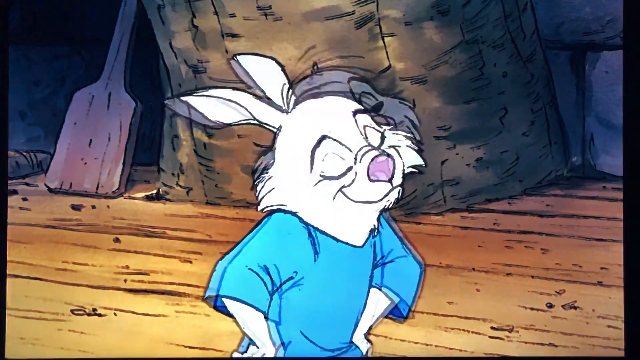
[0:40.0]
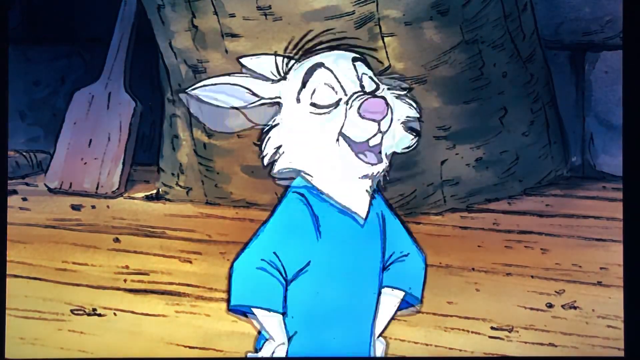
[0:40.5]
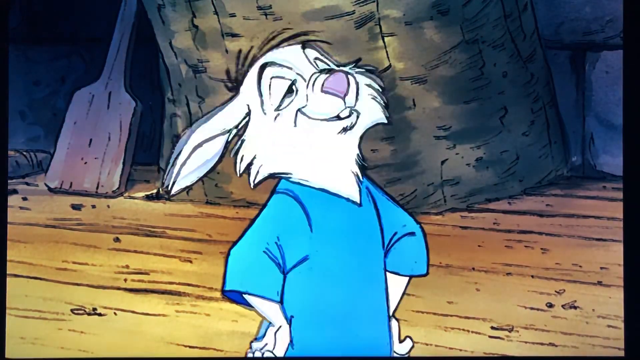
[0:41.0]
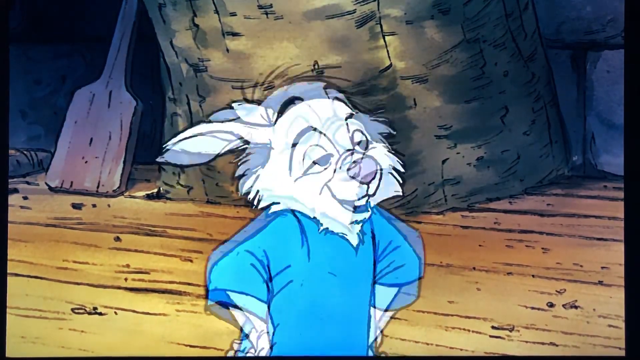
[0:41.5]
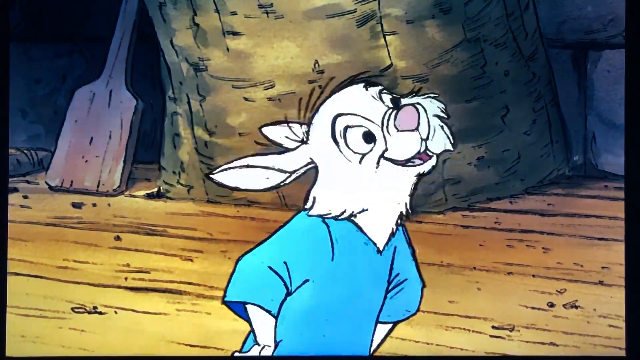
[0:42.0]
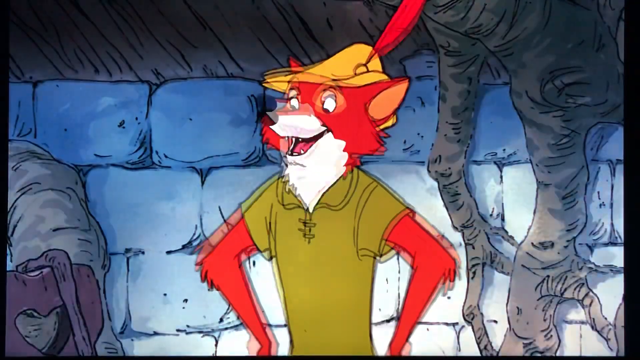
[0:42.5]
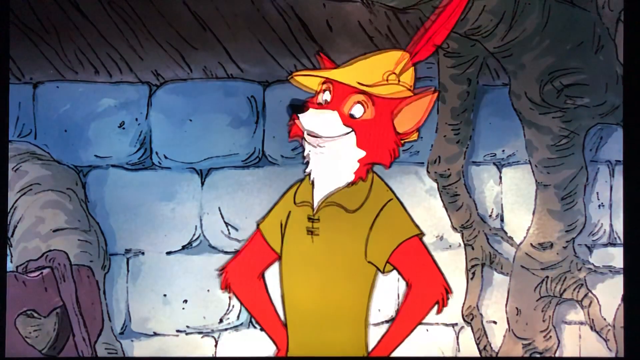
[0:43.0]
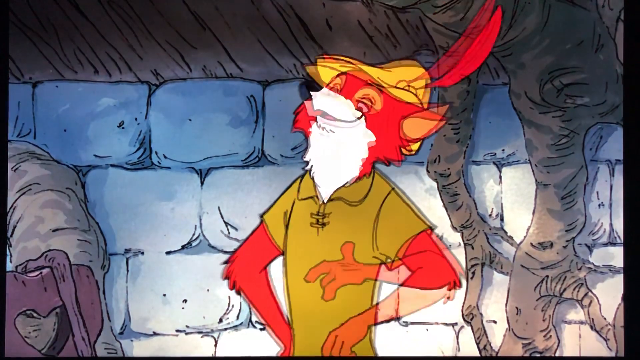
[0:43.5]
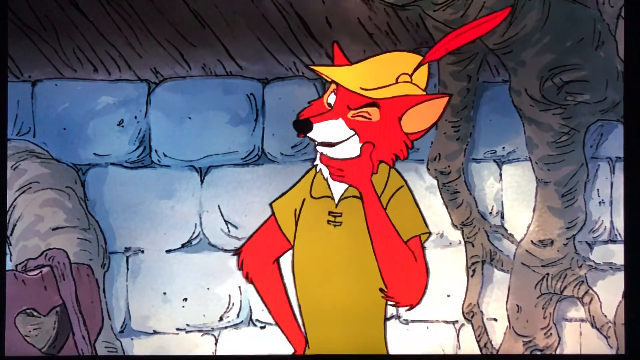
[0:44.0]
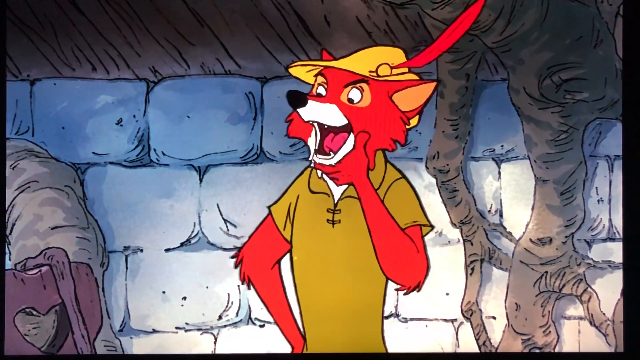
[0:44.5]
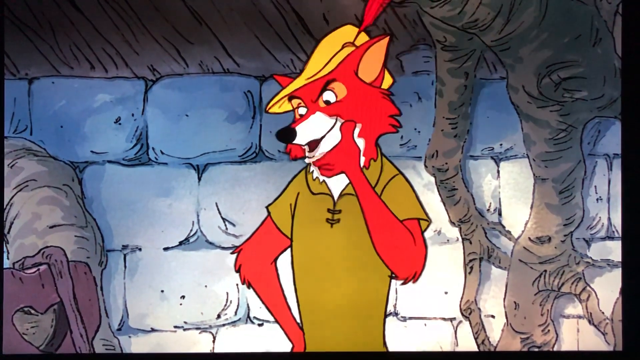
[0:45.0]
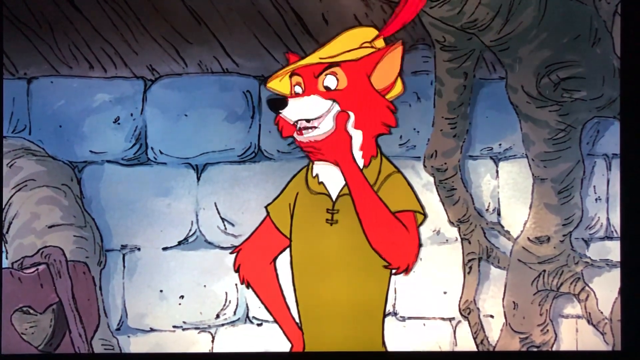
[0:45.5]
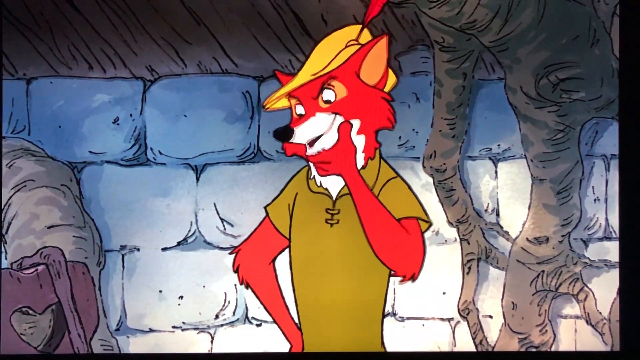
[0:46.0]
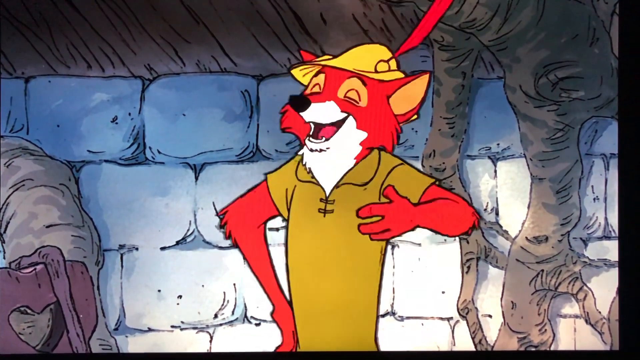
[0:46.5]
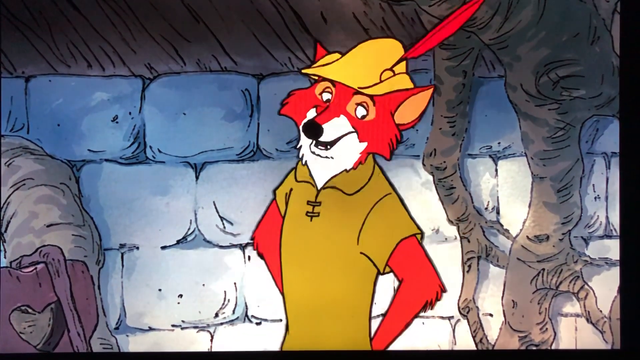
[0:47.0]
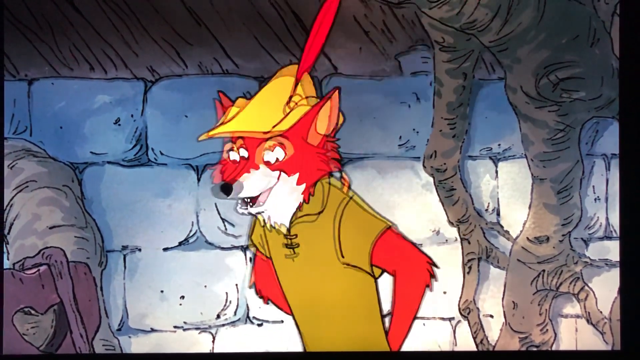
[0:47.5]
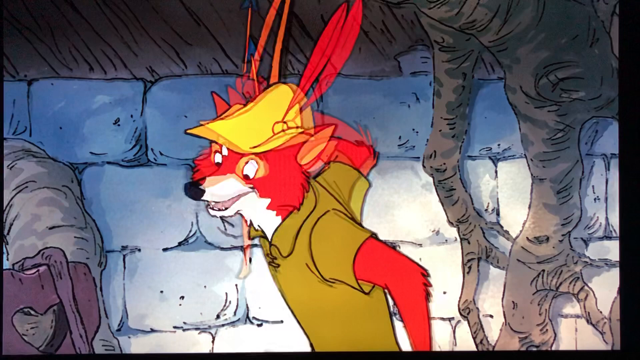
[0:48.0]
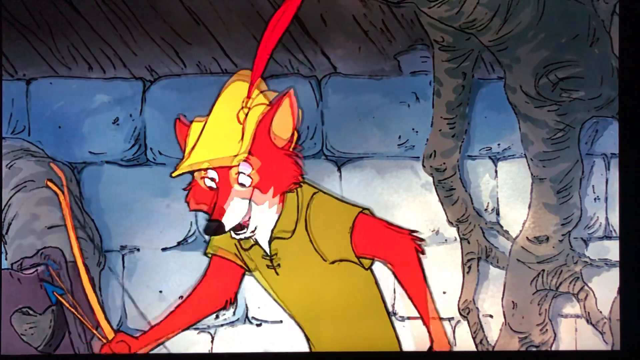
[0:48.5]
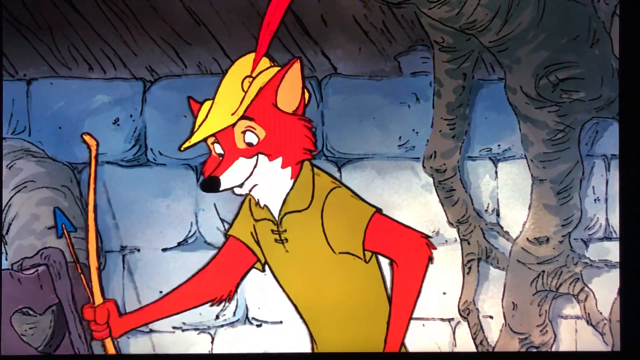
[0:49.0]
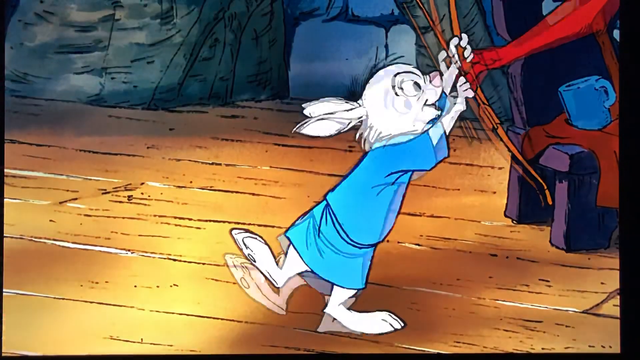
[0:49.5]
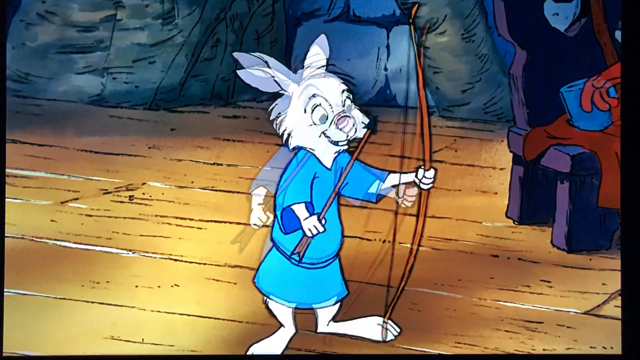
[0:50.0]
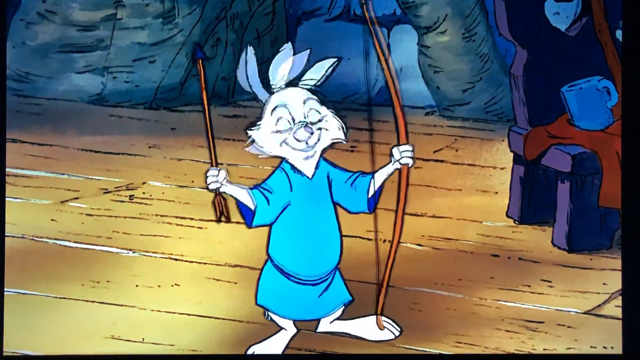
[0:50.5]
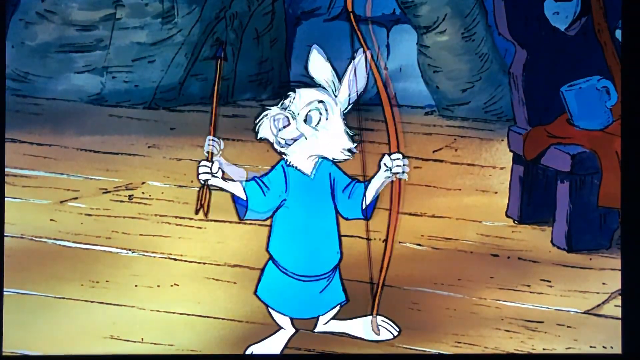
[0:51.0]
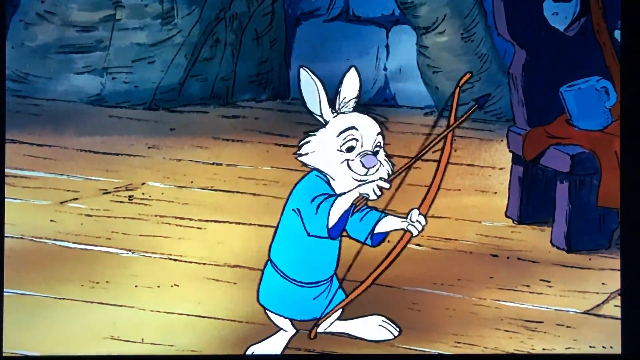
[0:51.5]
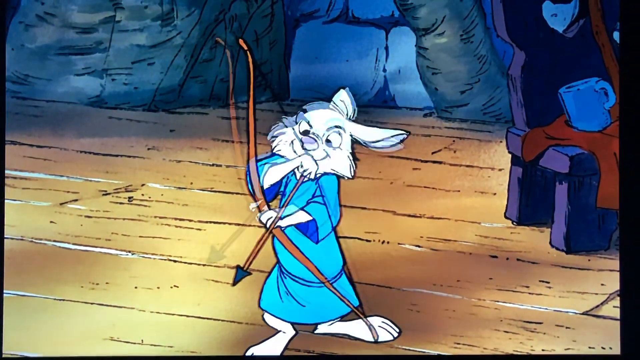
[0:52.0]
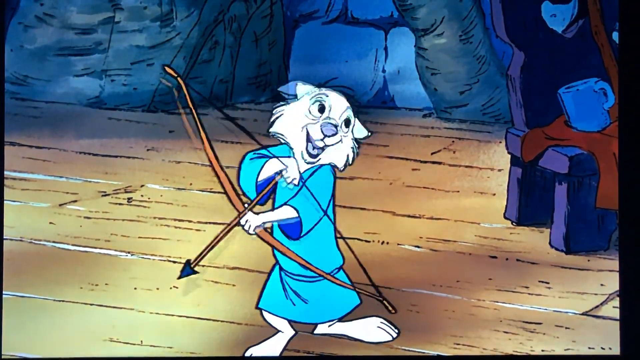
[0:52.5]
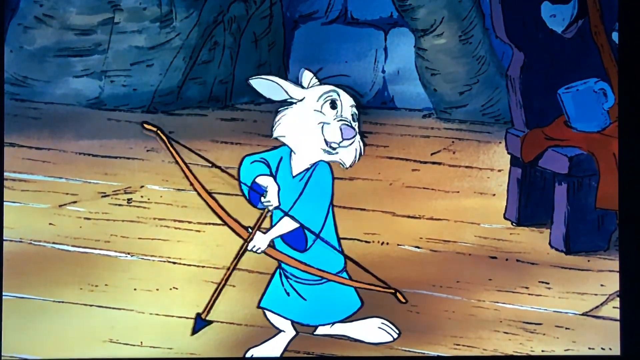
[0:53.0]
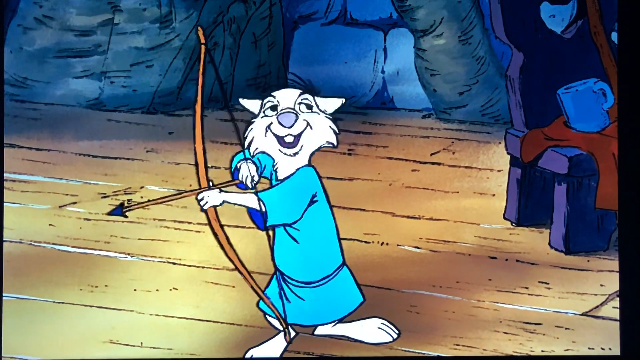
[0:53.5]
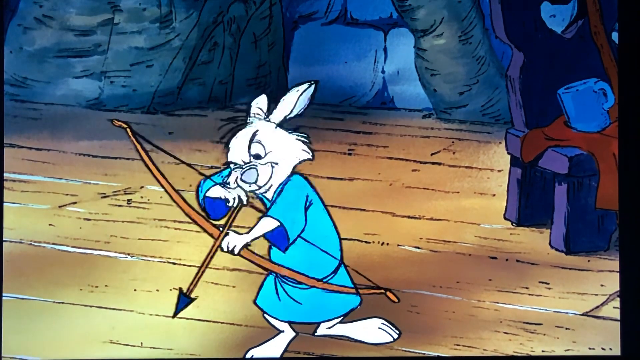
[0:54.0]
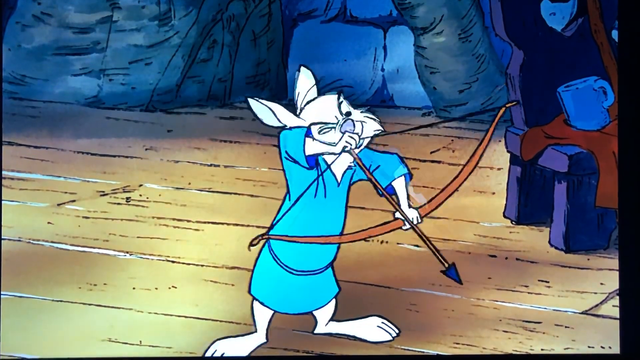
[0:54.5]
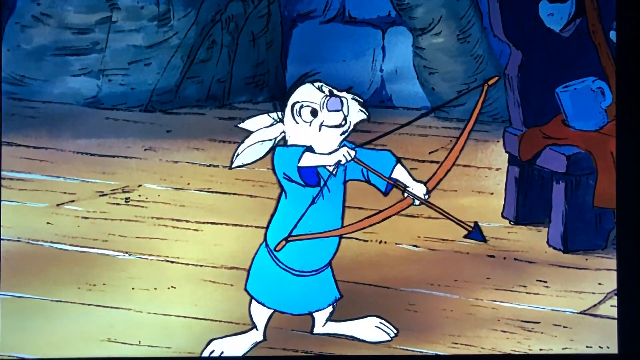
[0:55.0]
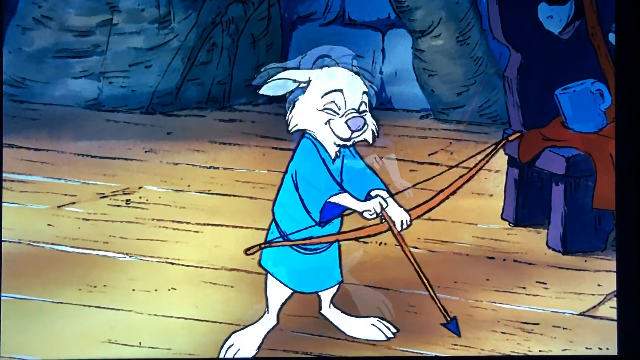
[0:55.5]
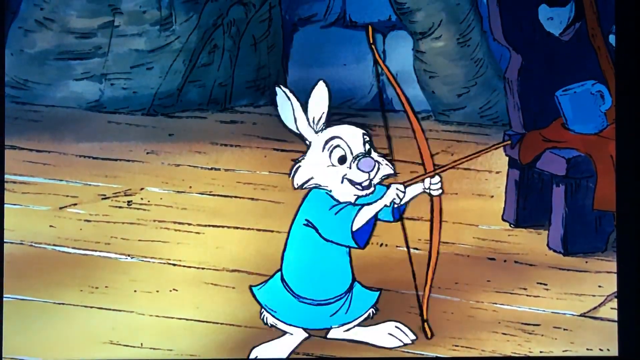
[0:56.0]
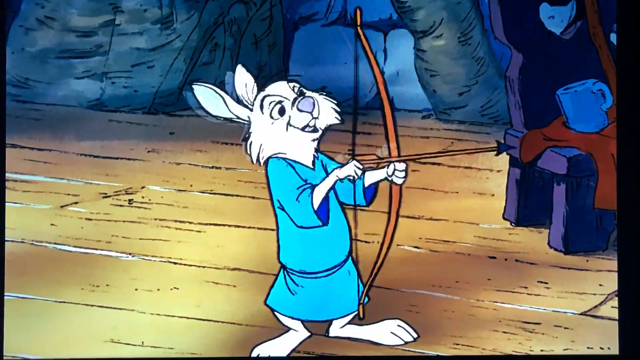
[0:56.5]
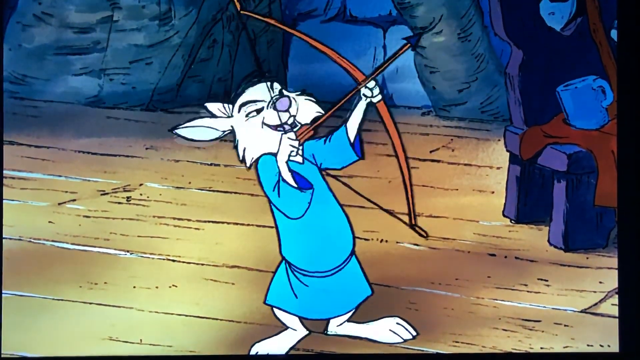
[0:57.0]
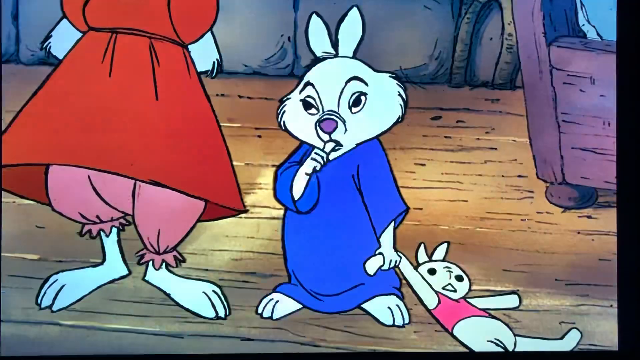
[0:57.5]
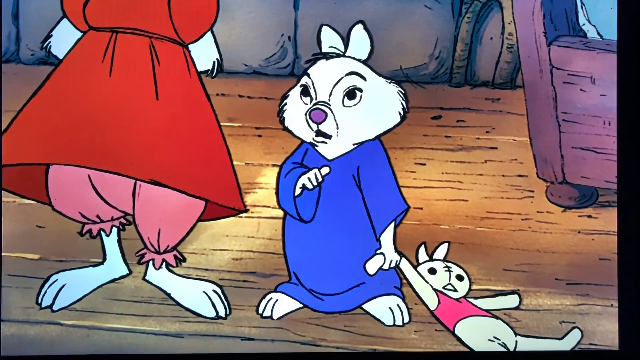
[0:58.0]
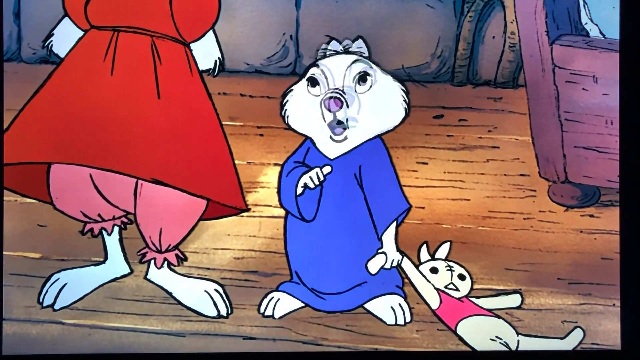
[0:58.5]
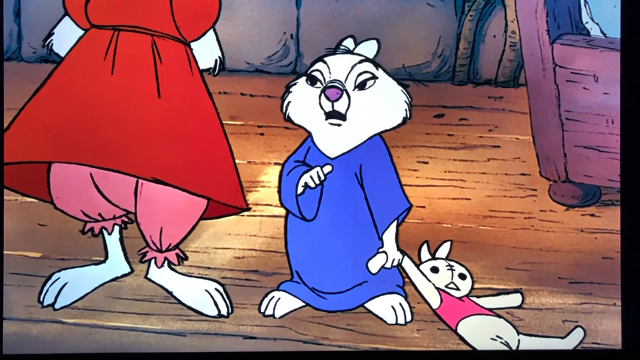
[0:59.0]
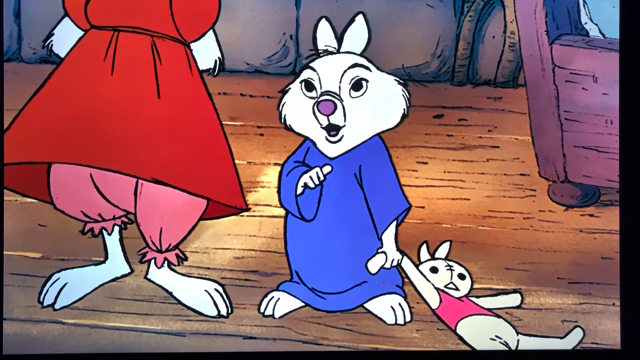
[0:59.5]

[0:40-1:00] The young rabbit in a blue shirt who was upset earlier talks with Robin Hood, who talks back to him, probably answering a question or two. Robin Hood then hands him a bow and arrow, and the rabbit looks very excited, going from sad to excited very quickly. His sister shakes her head no, maybe in disagreement; she is carrying a stuffed animal. The mother stands next to the sister and does not seem concerned about her son having the bow and arrow.